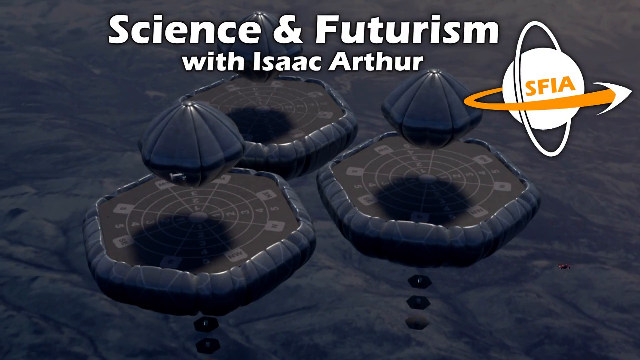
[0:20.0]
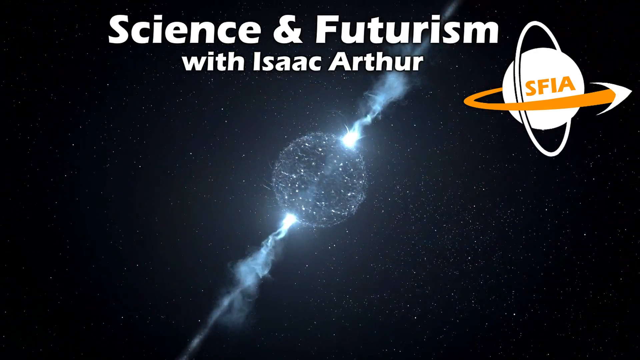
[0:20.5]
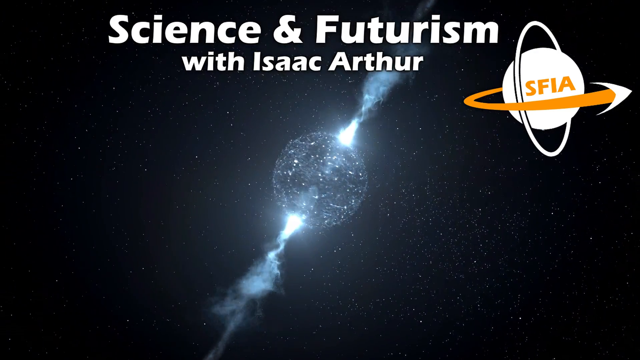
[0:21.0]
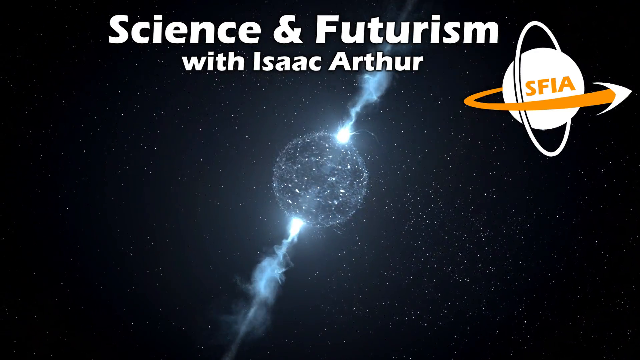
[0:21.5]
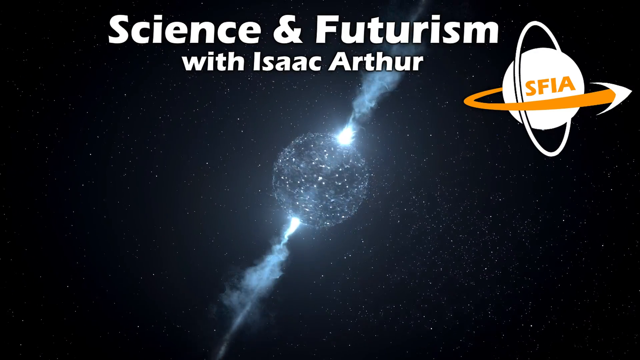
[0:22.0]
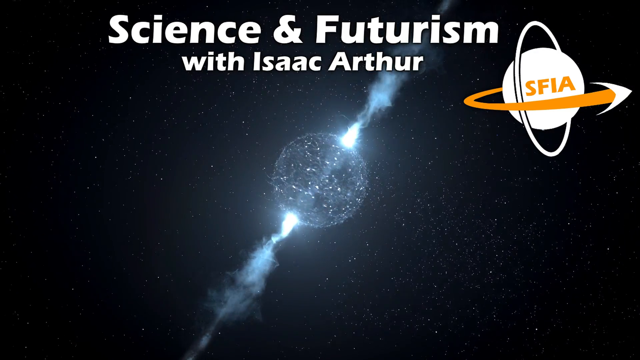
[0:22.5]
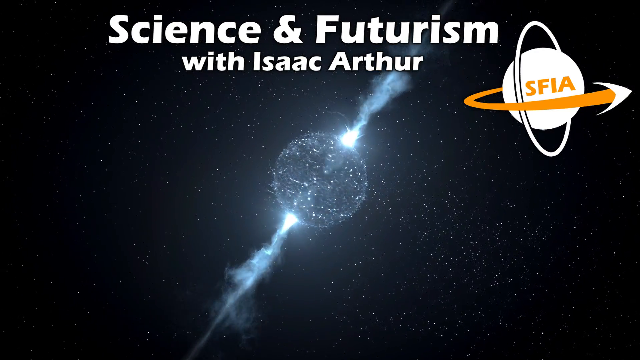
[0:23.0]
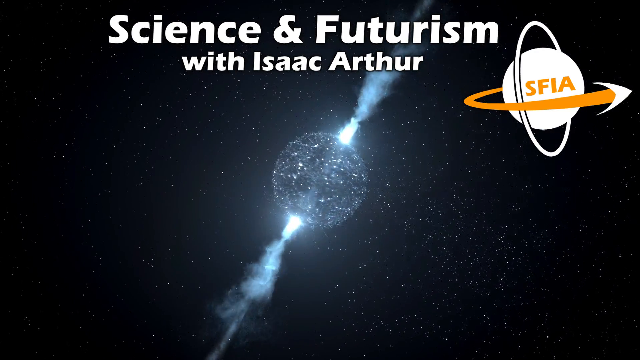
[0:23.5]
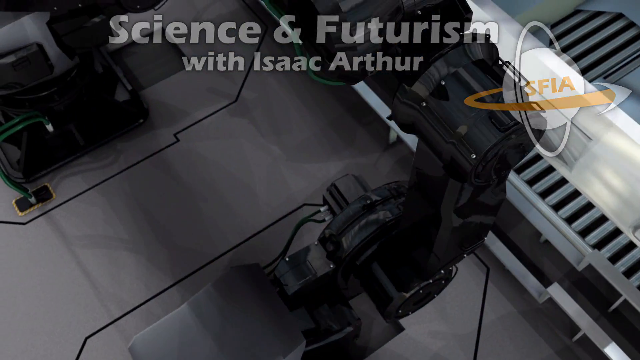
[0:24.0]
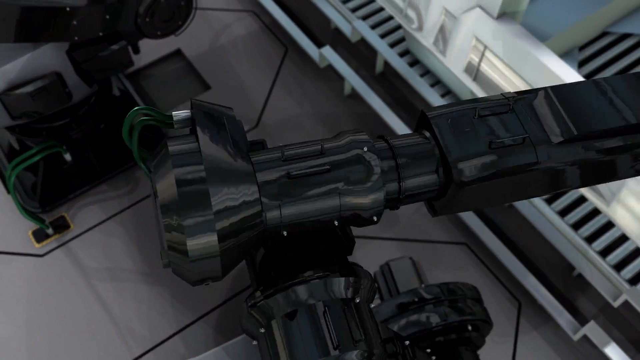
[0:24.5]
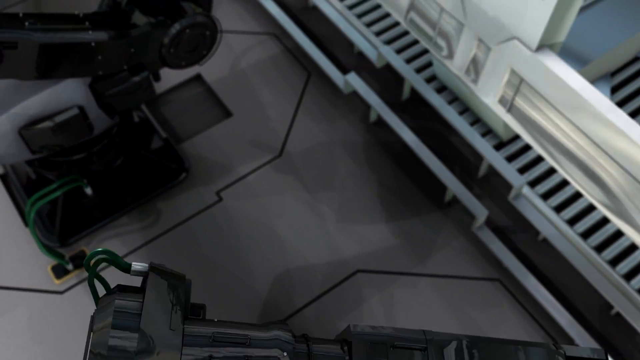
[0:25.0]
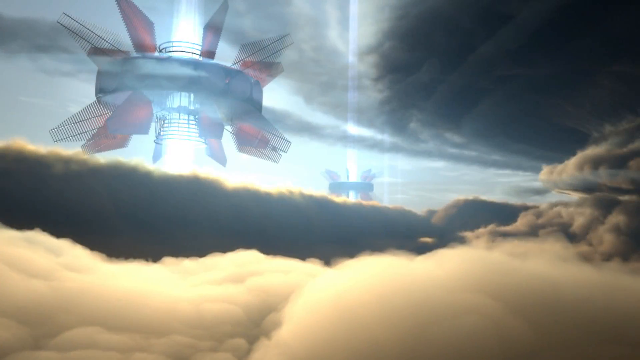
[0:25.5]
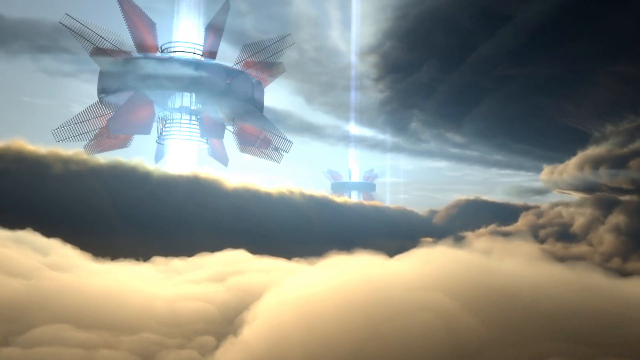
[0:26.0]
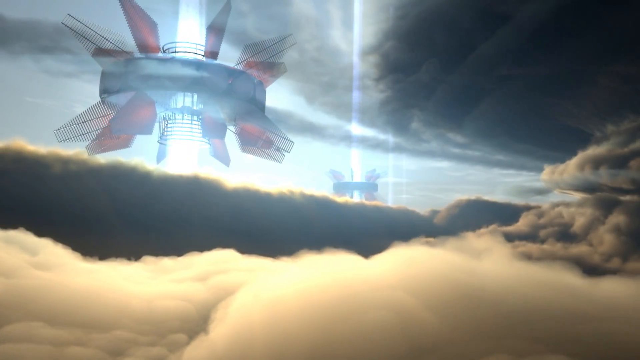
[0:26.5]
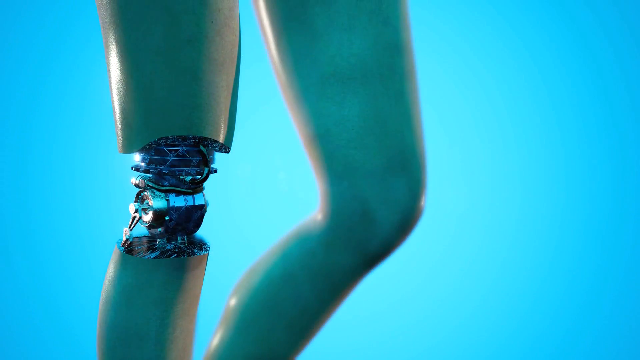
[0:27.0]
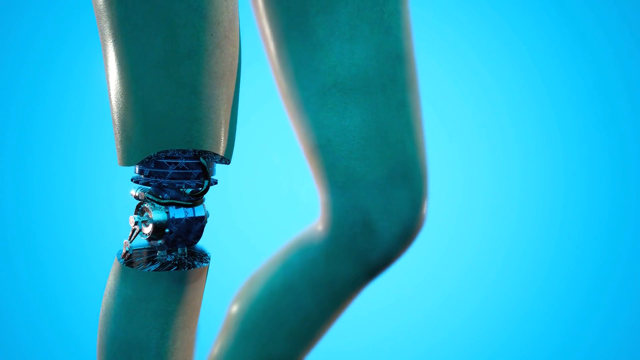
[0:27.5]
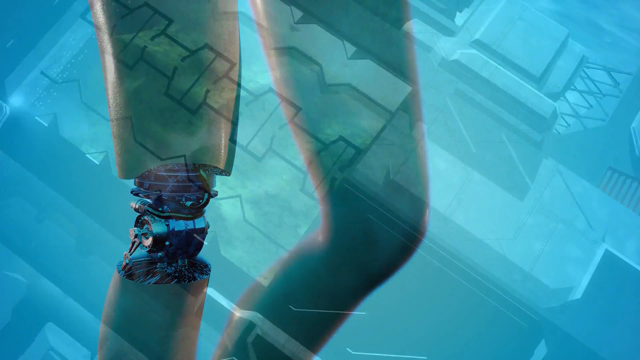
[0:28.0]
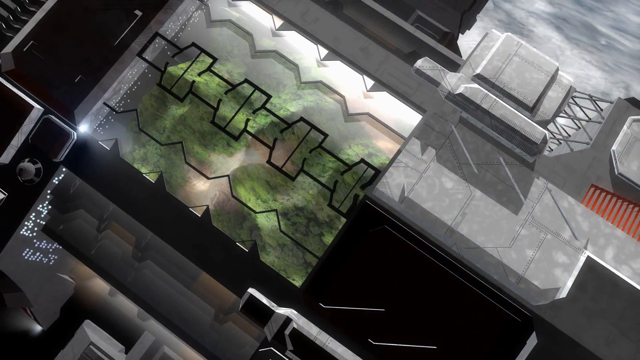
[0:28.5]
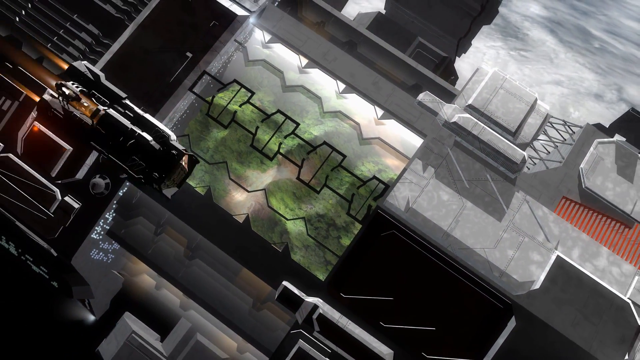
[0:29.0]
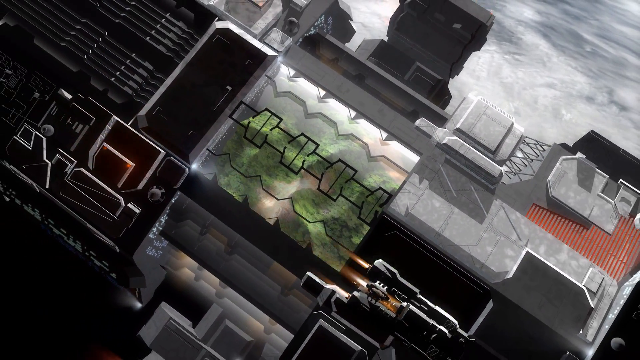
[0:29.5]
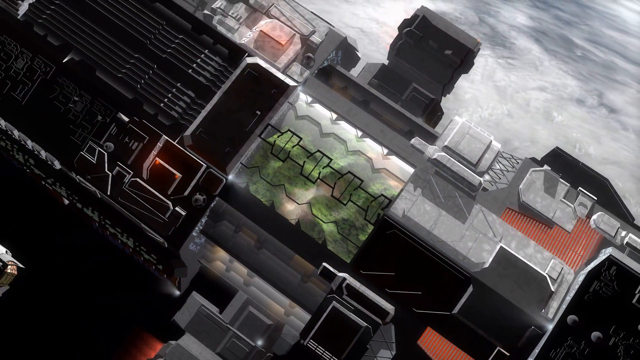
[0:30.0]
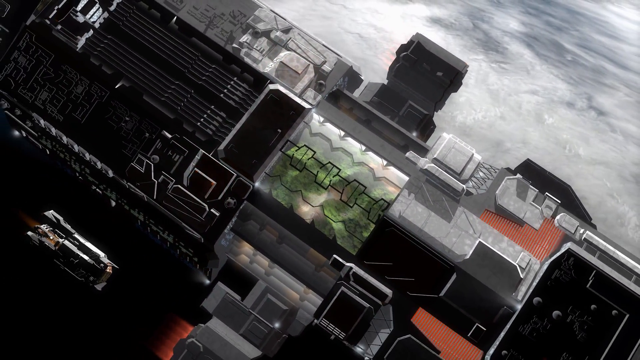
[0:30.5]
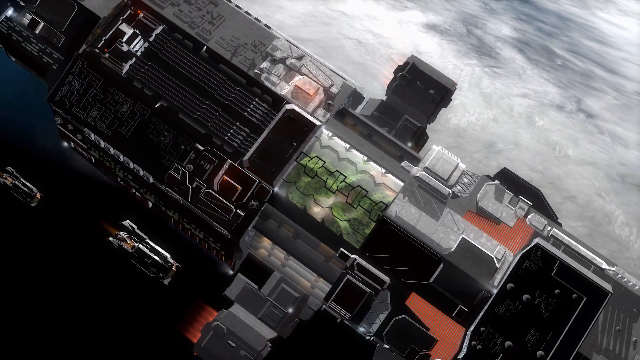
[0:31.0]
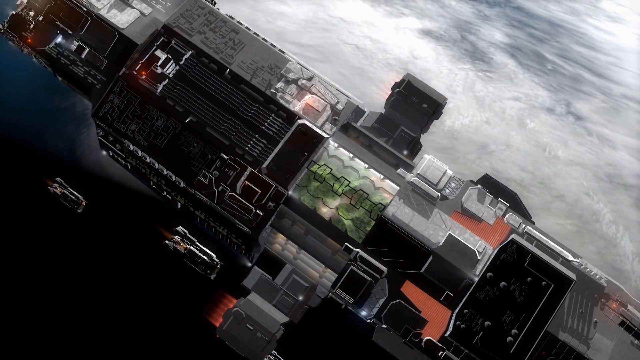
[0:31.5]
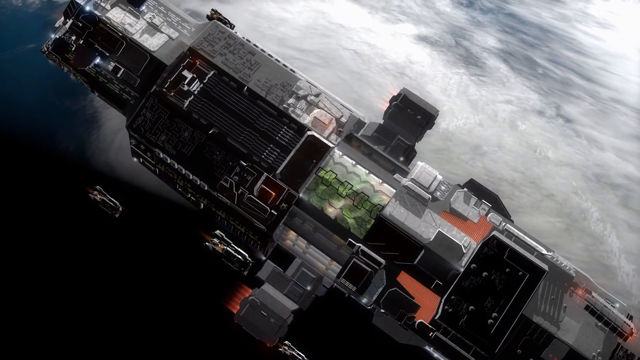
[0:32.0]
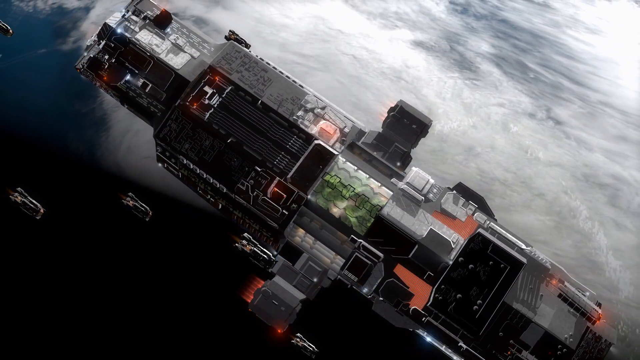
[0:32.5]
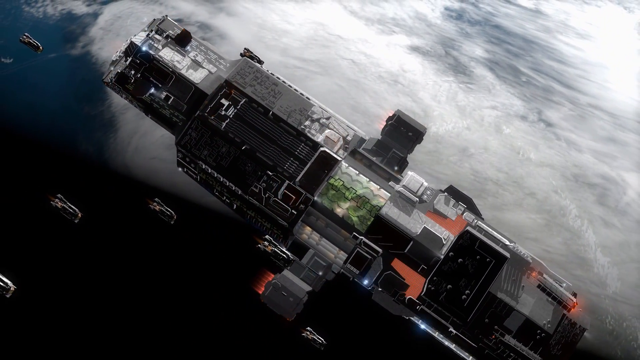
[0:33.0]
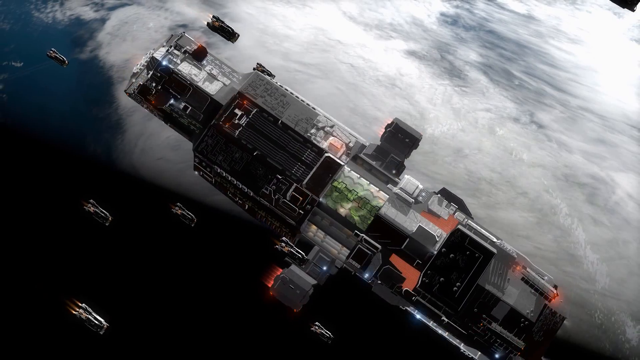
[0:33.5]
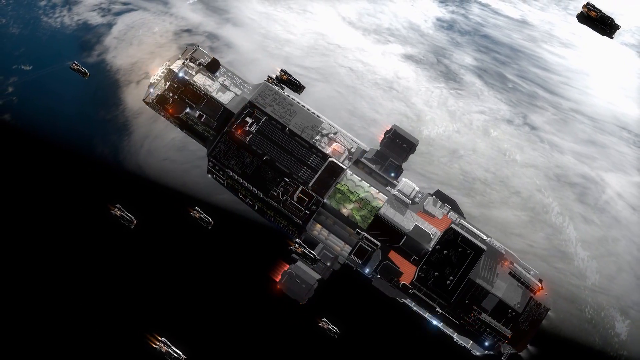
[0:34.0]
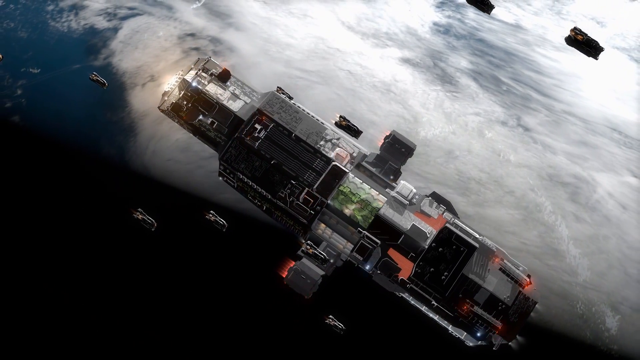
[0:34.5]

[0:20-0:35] Crafts move toward the floating pads, possibly landing pads, and a craft moves through that space. Then a spinning orb, a celestial body, appears; it looks like a bolt of lightning is going through it. It is very brightly lit on two sides, with smoke extending from both lights. The orb is circular with white or light spots, as if the light is coming from inside it and shooting out of two sides. Against the inky blackness the light at a certain point becomes vapor, and the orb spins and spins. The scene then morphs into a robot arm, apparently in a shop somewhere. Next, seemingly in Earth's atmosphere, there is a lot of smoke, followed by a view of a robot's two legs: the left one is intact and looks human-like, while a section of the outside of the right knee has been removed, revealing that it is a robot leg. The scene returns to outer space, where what looks like a hovering station has smaller crafts hovering around it, with clouds below, apparently above Earth.